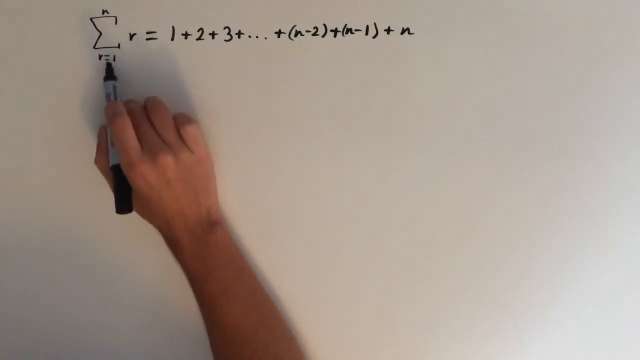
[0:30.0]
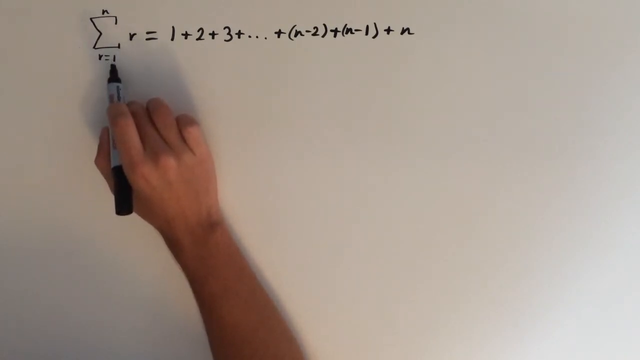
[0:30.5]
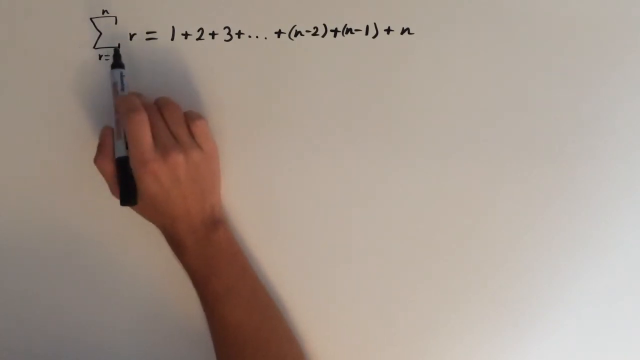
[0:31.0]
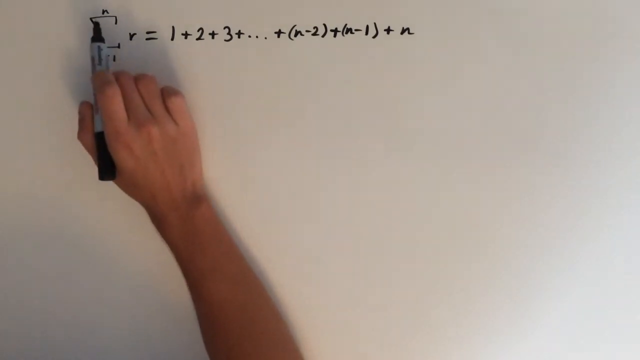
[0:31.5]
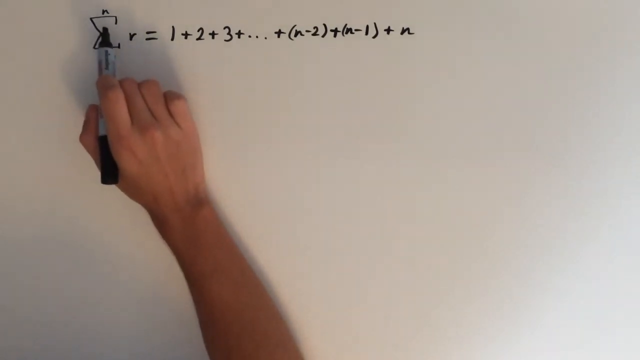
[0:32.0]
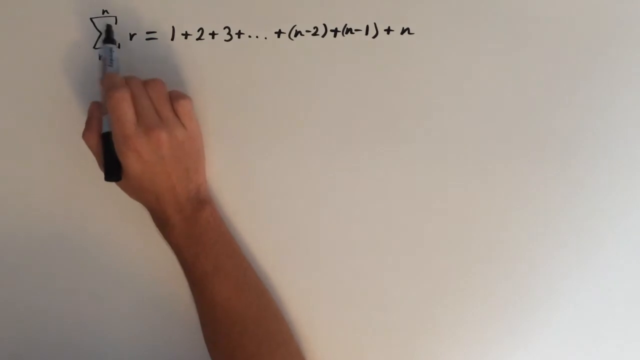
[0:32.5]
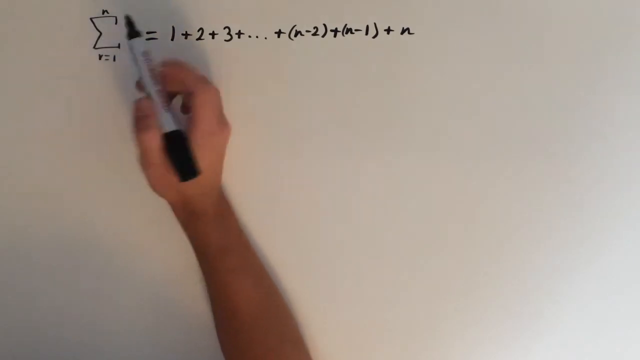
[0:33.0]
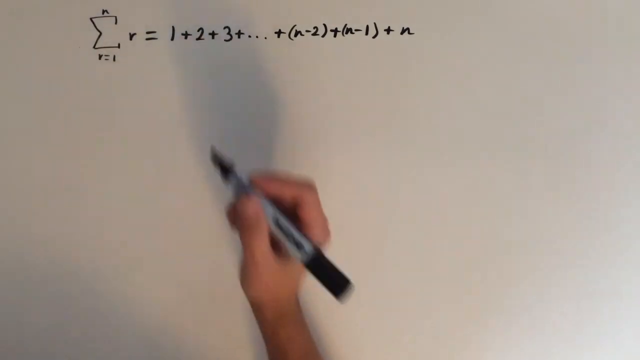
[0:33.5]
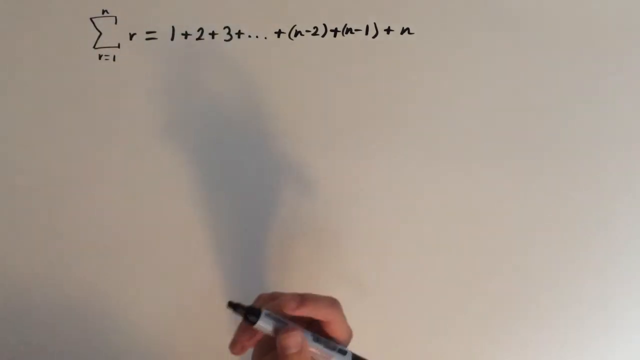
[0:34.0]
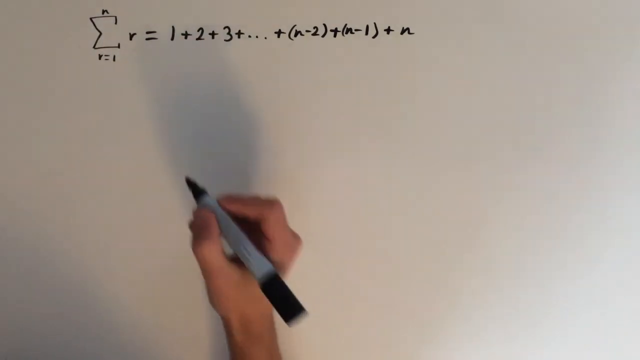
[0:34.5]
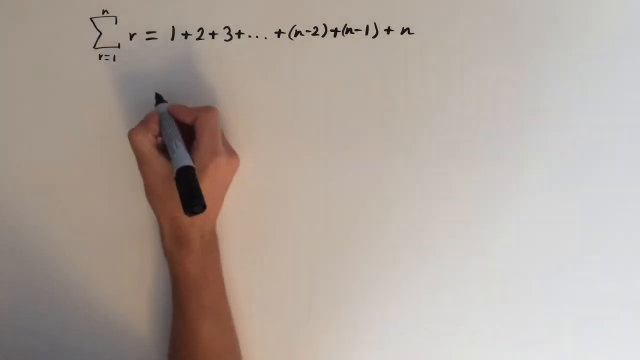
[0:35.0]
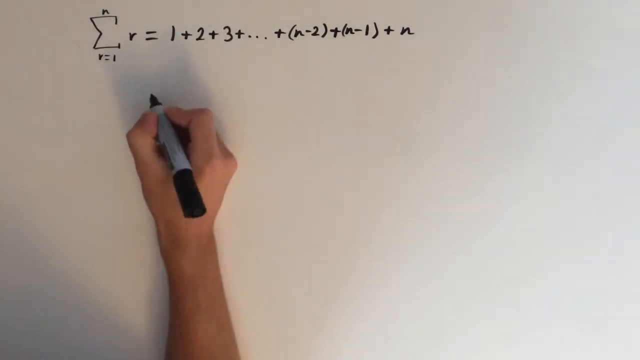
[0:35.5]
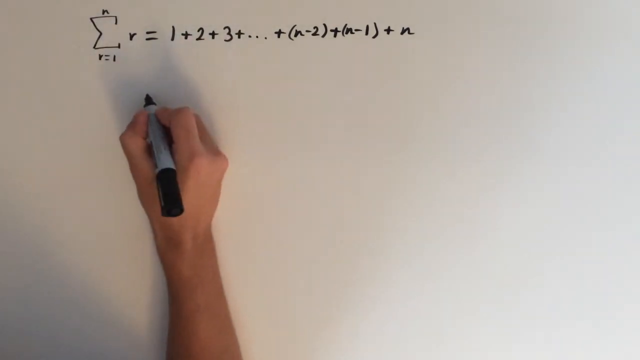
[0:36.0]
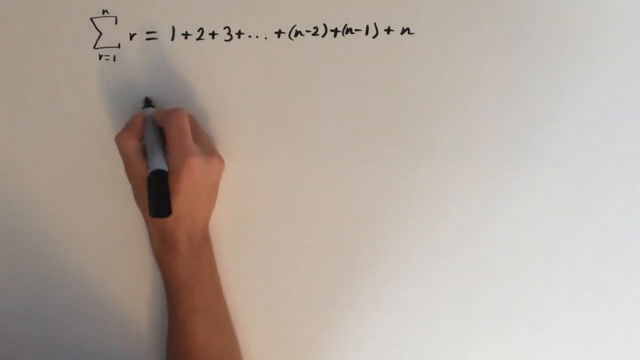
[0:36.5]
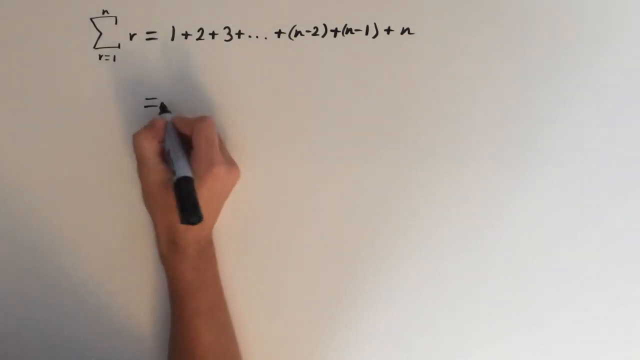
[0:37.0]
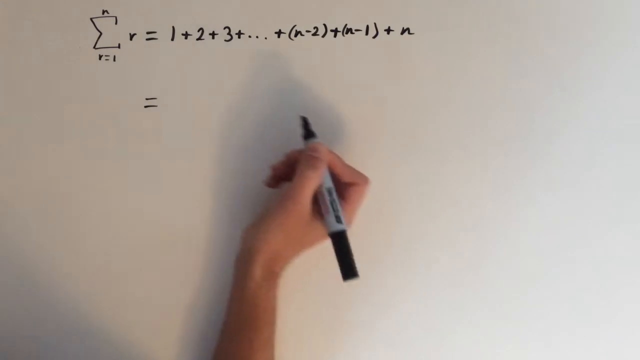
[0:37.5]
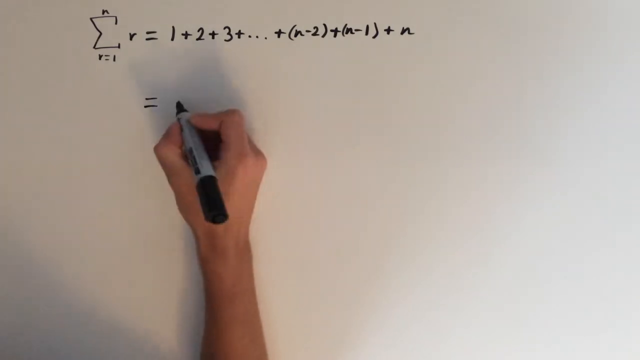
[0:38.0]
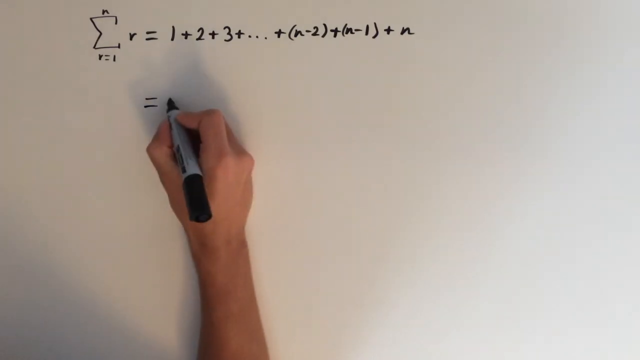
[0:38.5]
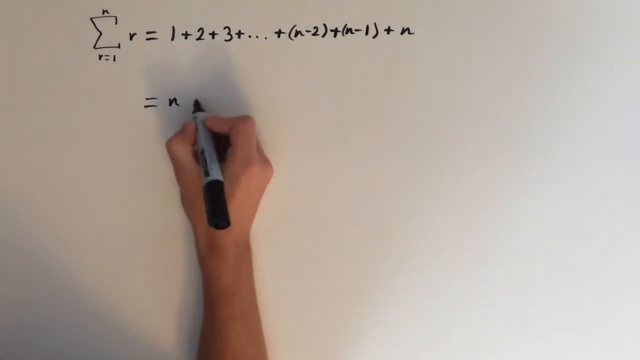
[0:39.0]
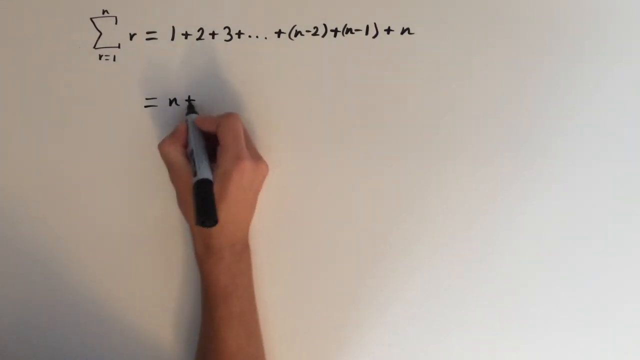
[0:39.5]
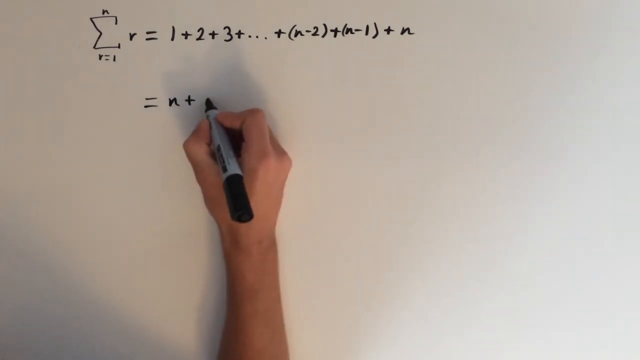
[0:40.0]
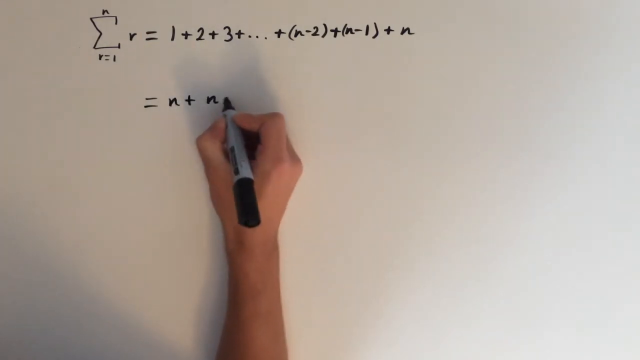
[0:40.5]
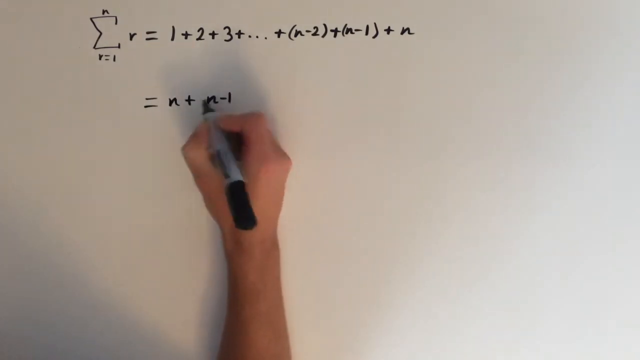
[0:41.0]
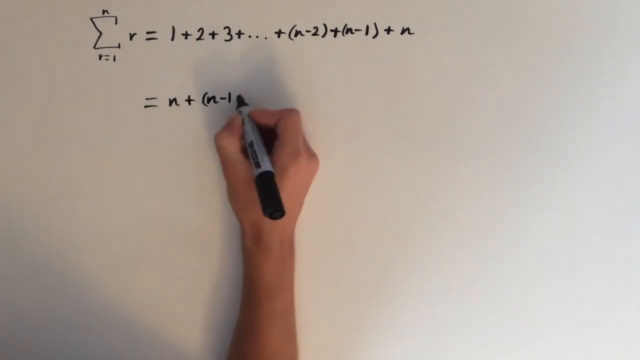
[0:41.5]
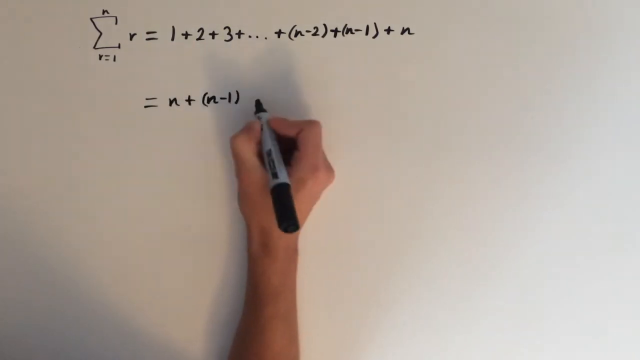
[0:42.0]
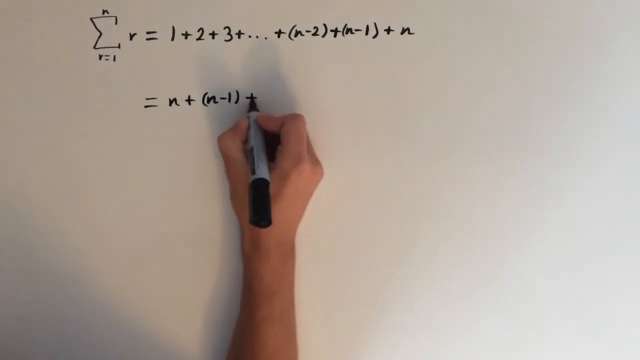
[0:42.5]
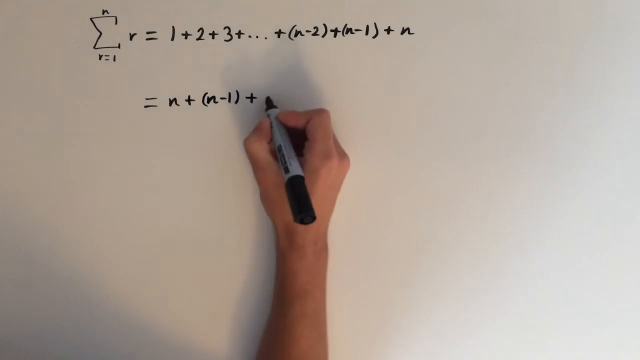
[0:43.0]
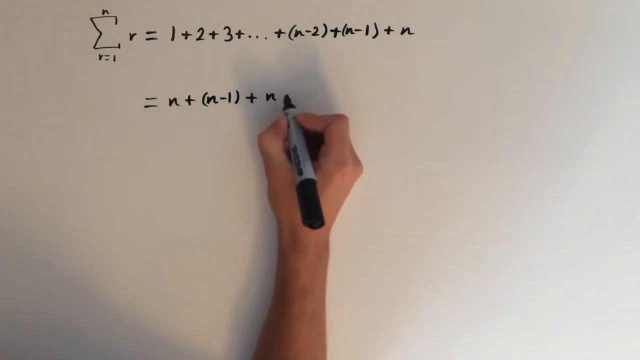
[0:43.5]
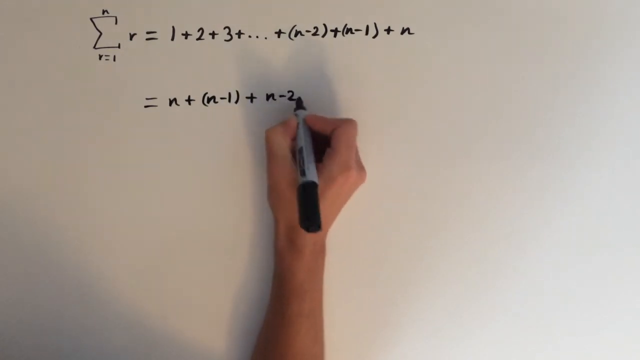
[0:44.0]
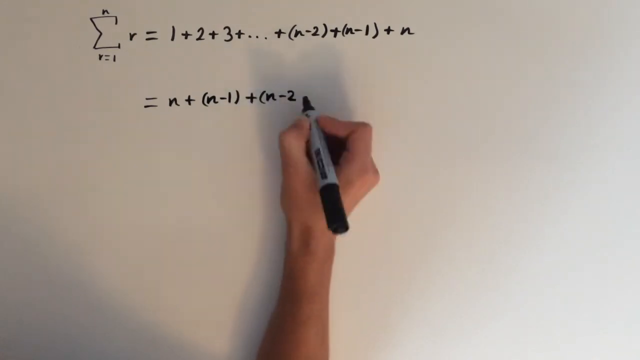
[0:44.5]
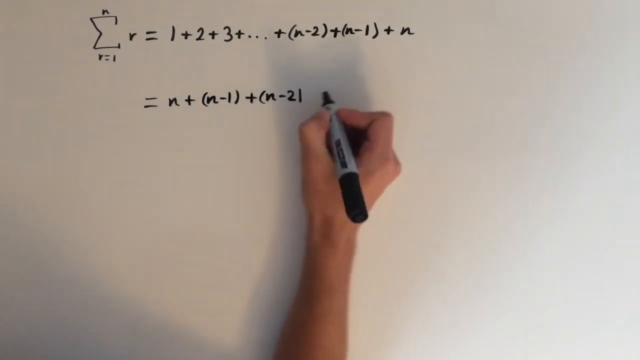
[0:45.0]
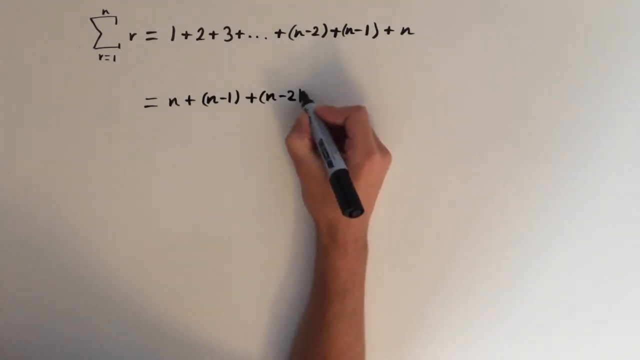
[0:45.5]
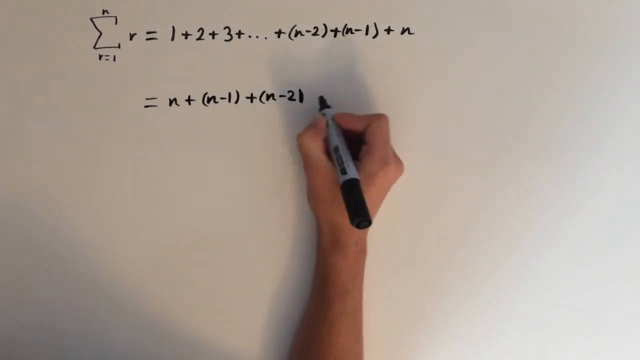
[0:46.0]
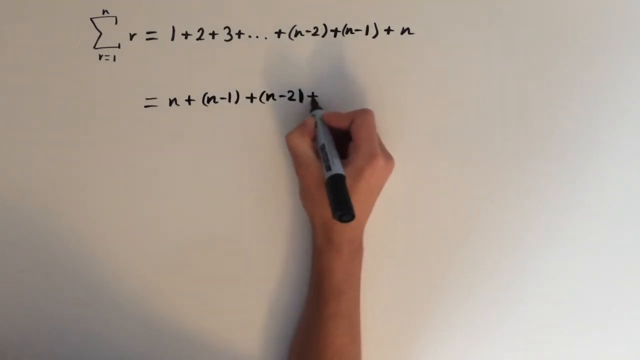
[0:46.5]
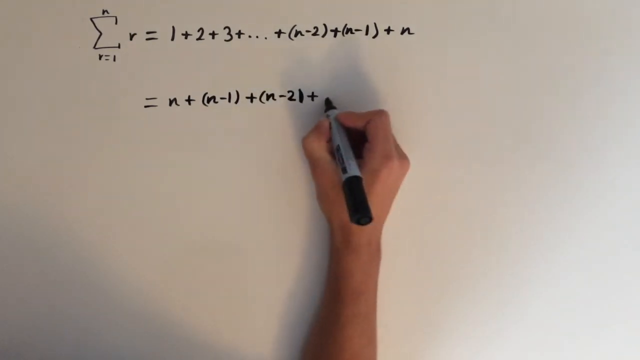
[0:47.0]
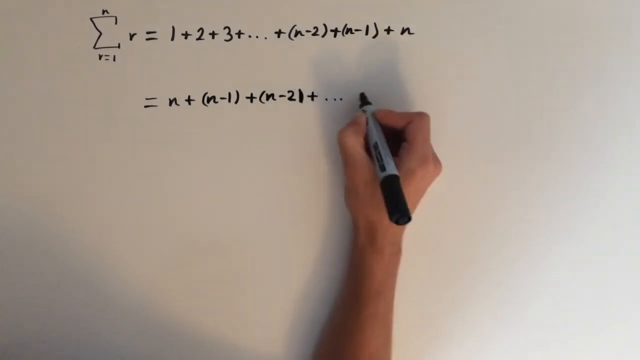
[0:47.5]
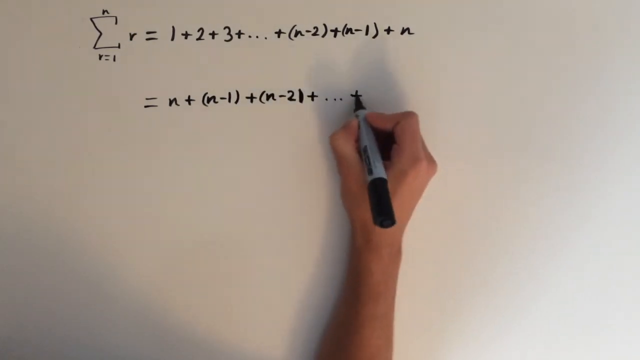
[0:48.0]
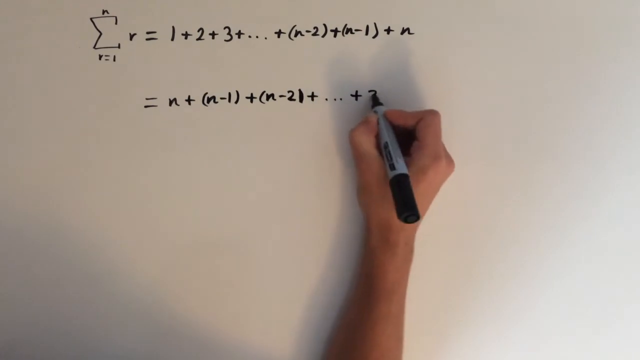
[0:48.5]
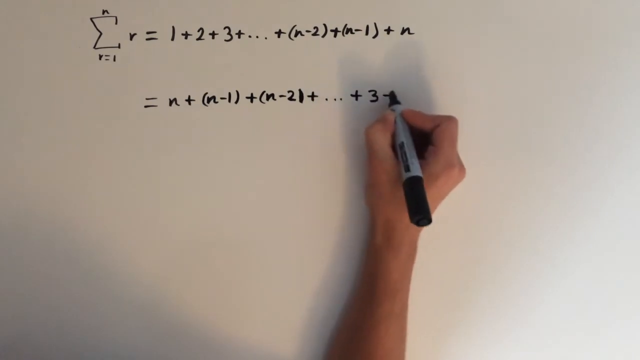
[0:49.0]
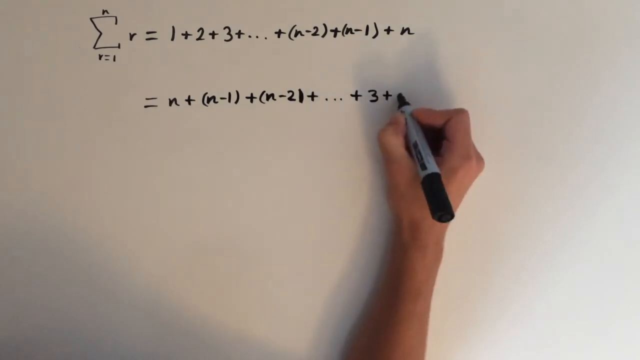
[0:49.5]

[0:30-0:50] The host hovers the marker over the n and the r = 1, then writes "= n + (n − 1) + (n − 2) + (n − 3) +", rewriting the first formula backwards. His arm is white and seems to be of average size, neither fat nor skinny. The marker is a normal whiteboard marker, black with a black tip, a black lid and a grey body.